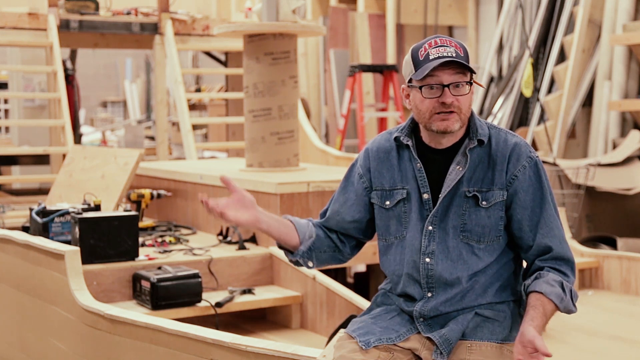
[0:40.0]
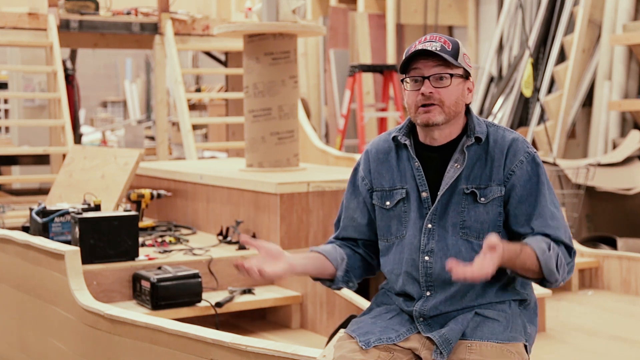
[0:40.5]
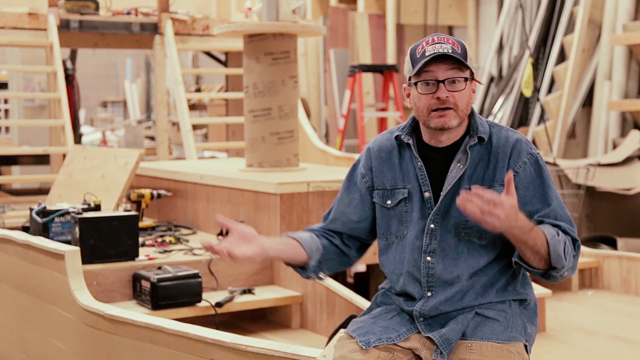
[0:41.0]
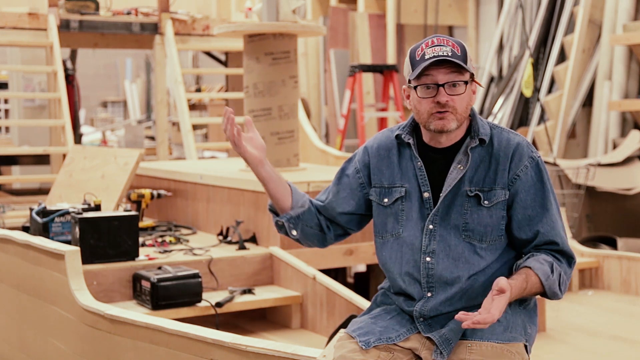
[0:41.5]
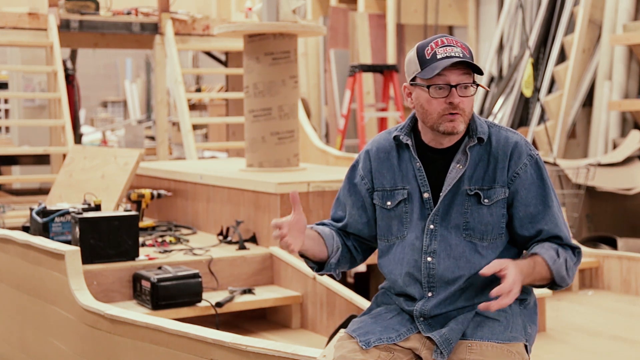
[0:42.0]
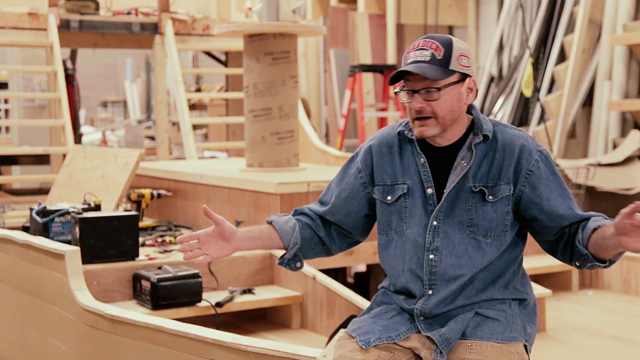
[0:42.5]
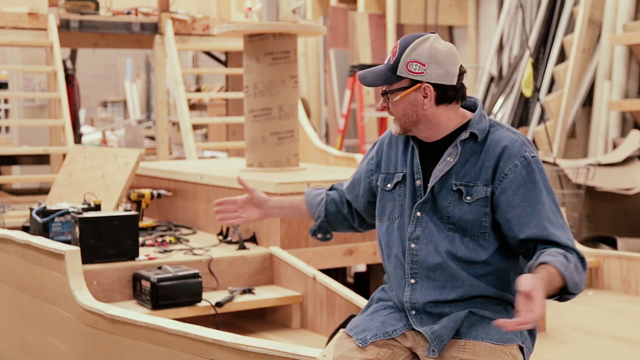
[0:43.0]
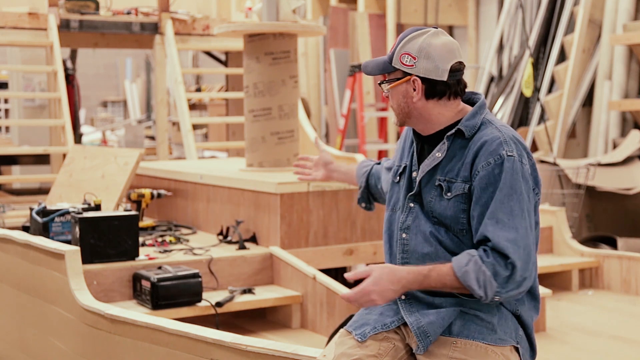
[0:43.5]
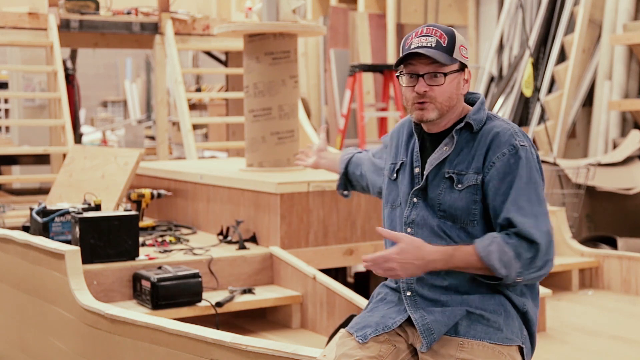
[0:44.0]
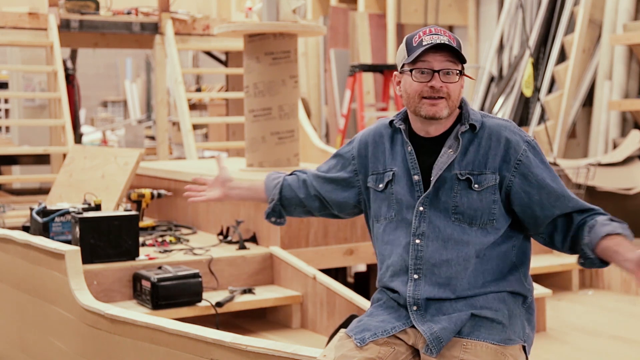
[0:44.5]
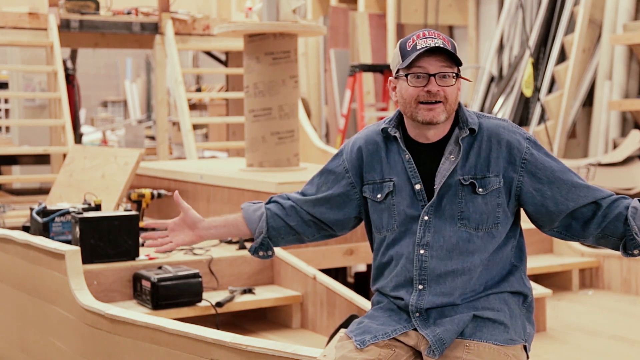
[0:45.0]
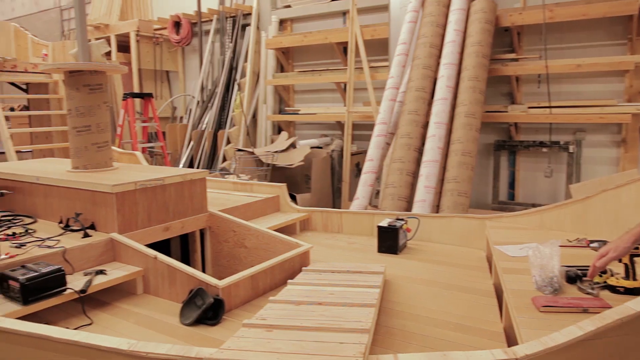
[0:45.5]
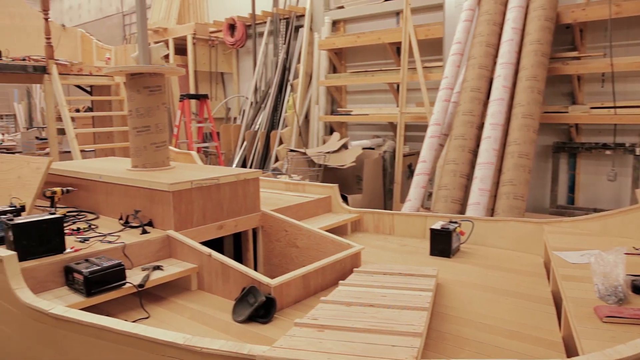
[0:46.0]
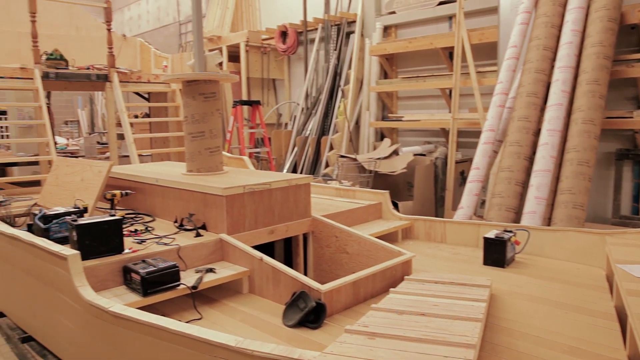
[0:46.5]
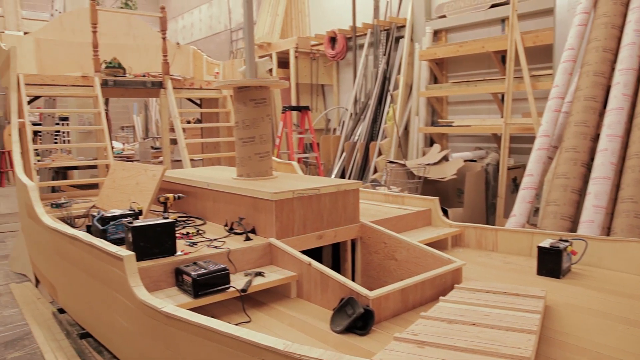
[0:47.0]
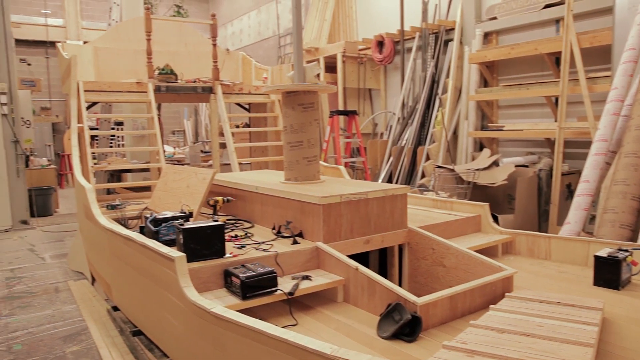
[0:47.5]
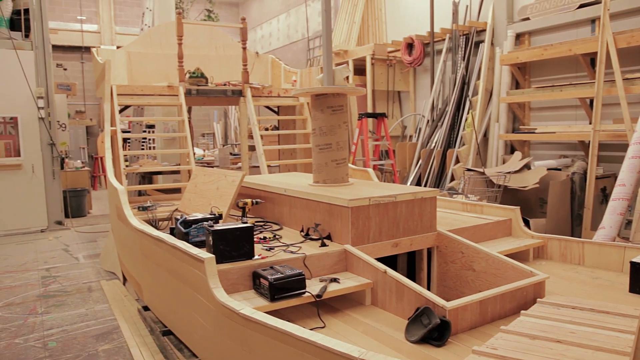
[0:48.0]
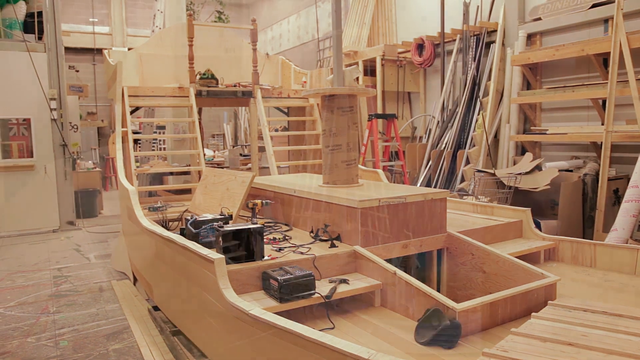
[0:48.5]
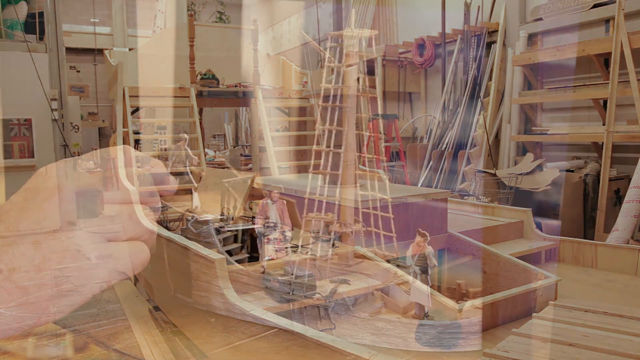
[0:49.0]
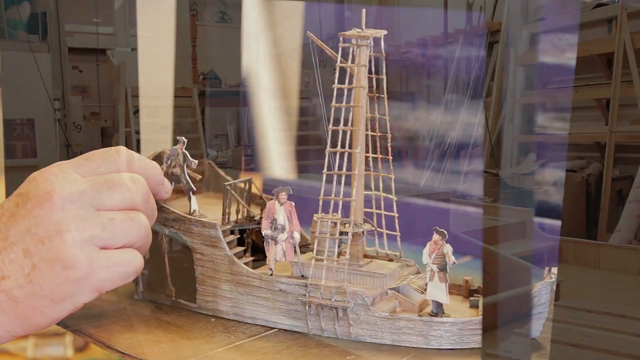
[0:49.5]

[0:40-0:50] A white man wears a denim t-shirt with a white and black t-shirt underneath, along with sunglasses and a cap. In the background is the equipment he works with, as well as some stairs and a red ladder behind him. On the right side of his hand is a yellow trailer. The setting is the studio or workplace where the man makes his carpentry. Toward the end, the man moves a carpentry ship around with his hands.